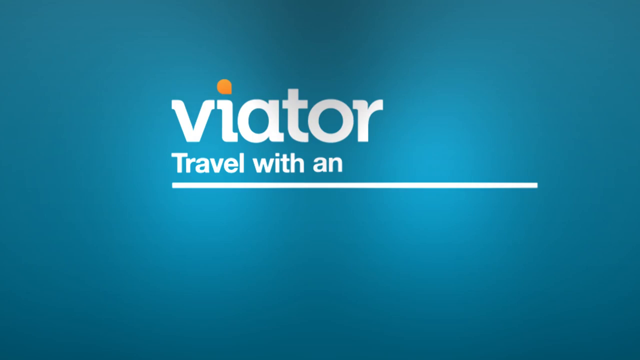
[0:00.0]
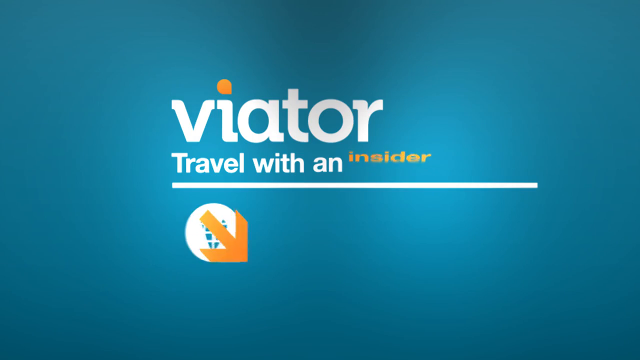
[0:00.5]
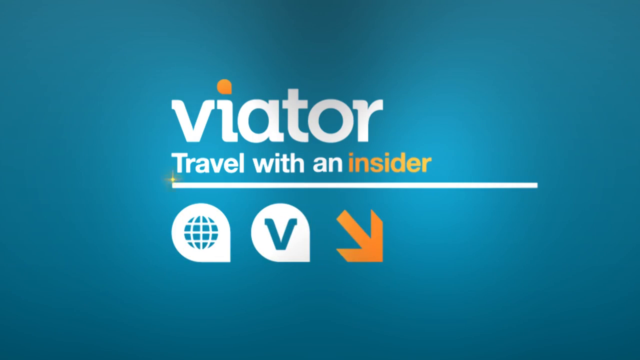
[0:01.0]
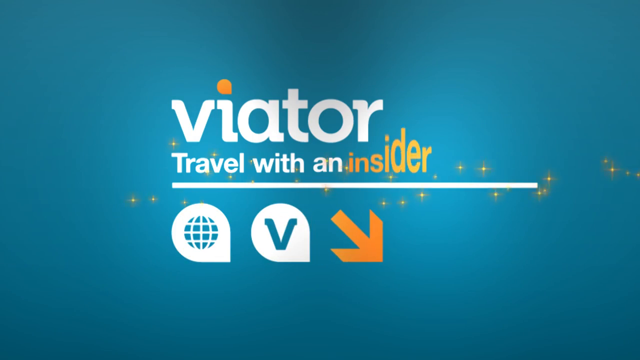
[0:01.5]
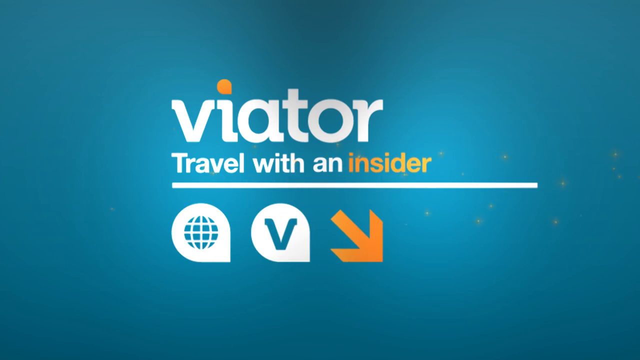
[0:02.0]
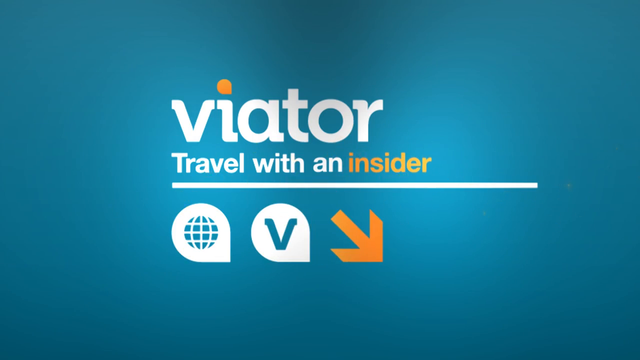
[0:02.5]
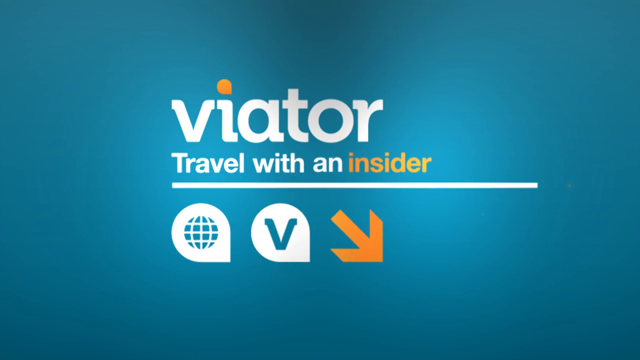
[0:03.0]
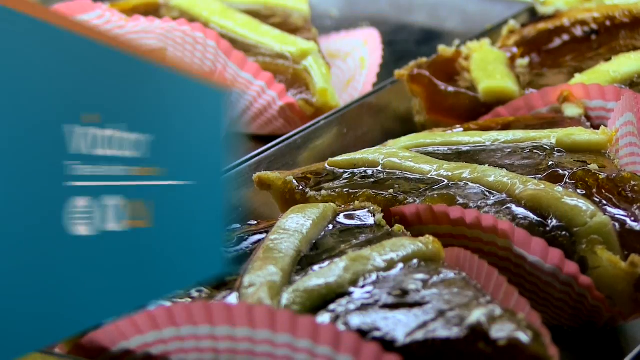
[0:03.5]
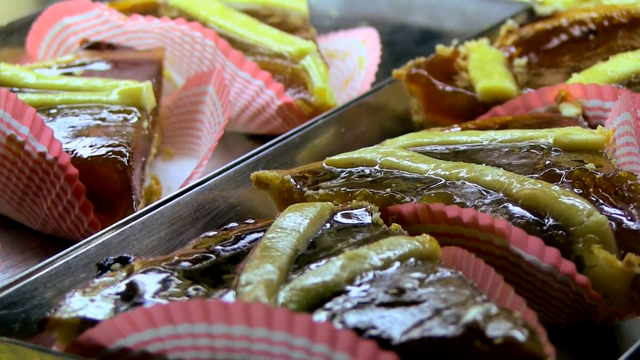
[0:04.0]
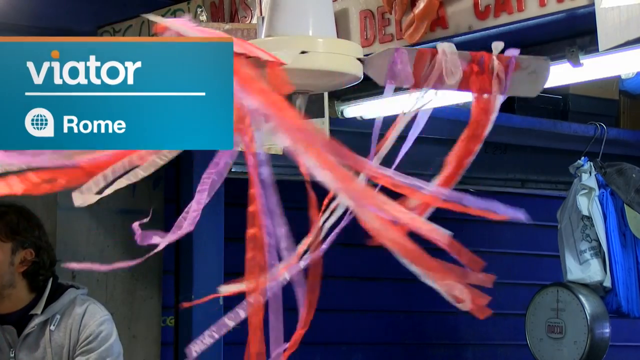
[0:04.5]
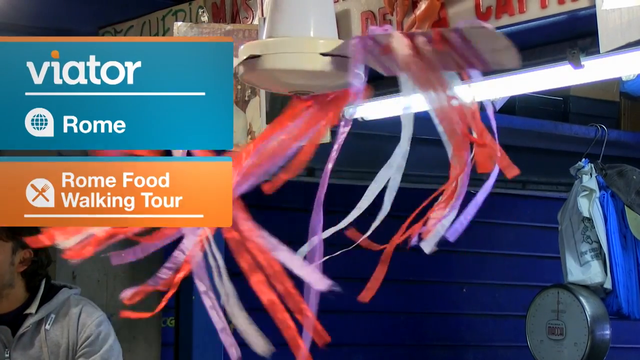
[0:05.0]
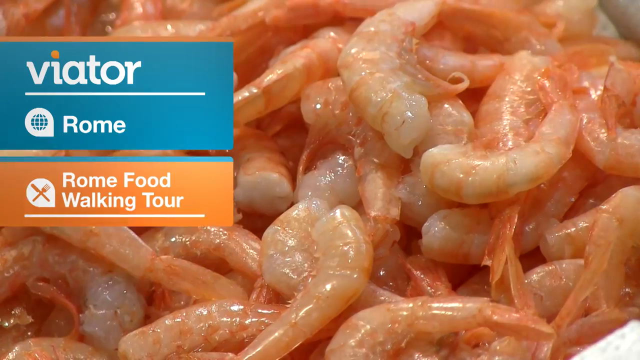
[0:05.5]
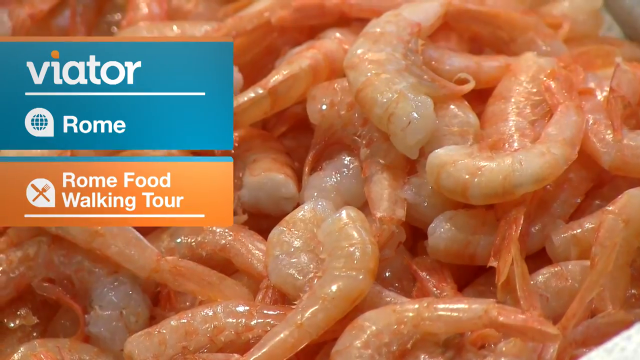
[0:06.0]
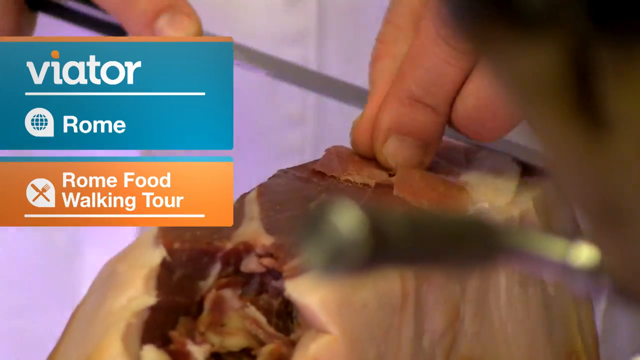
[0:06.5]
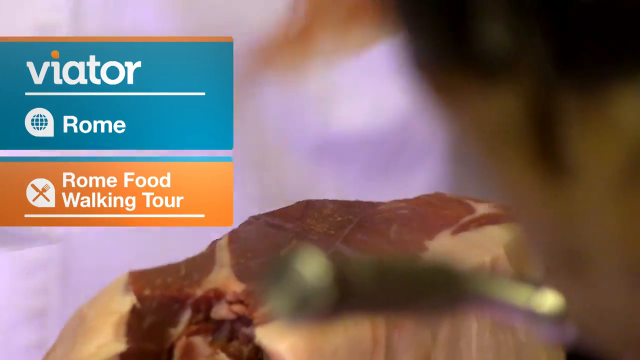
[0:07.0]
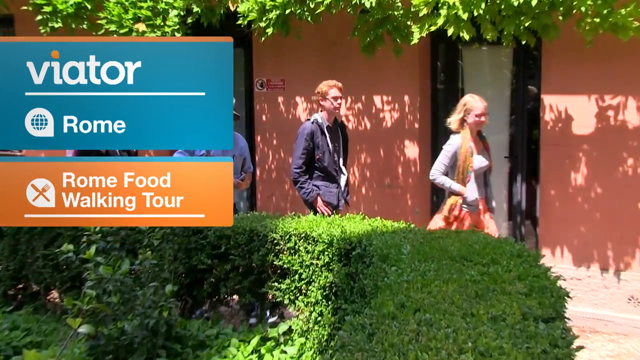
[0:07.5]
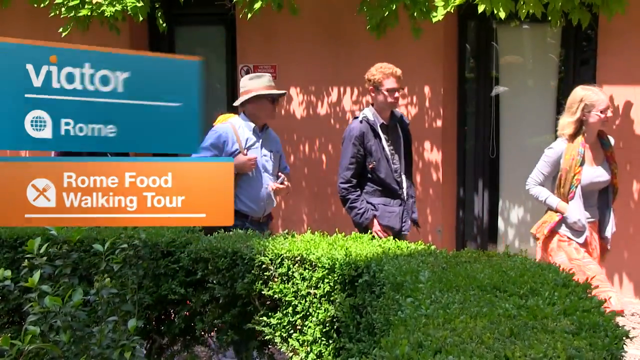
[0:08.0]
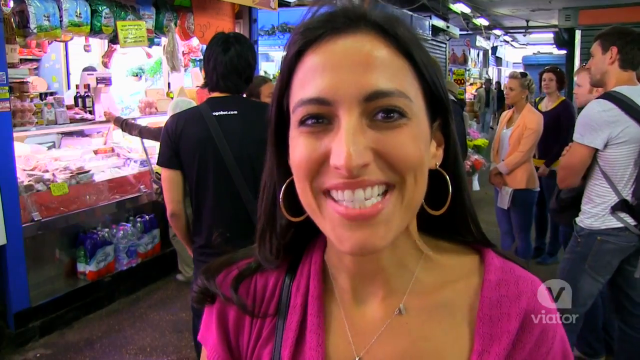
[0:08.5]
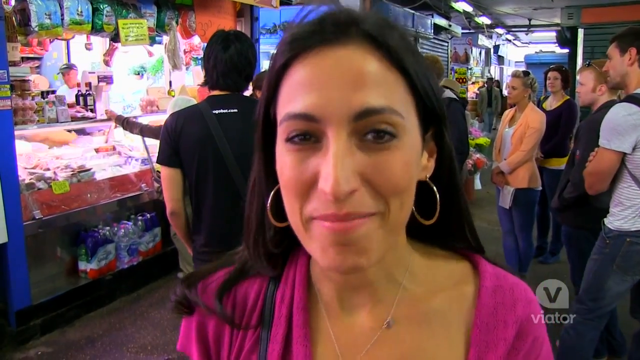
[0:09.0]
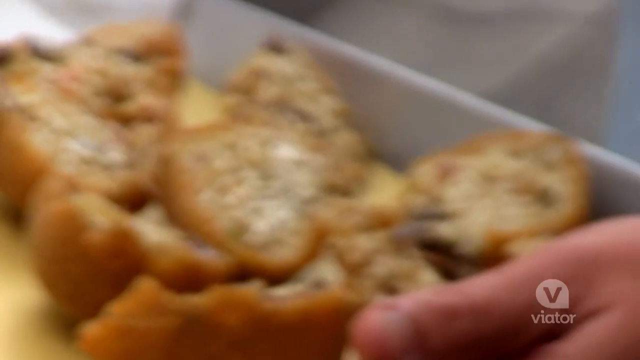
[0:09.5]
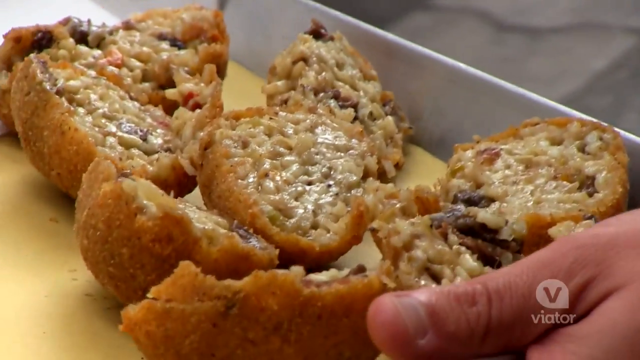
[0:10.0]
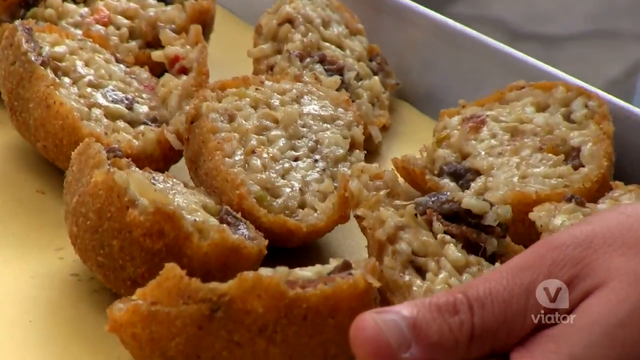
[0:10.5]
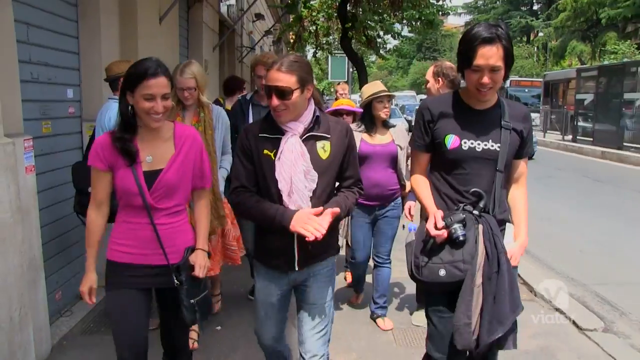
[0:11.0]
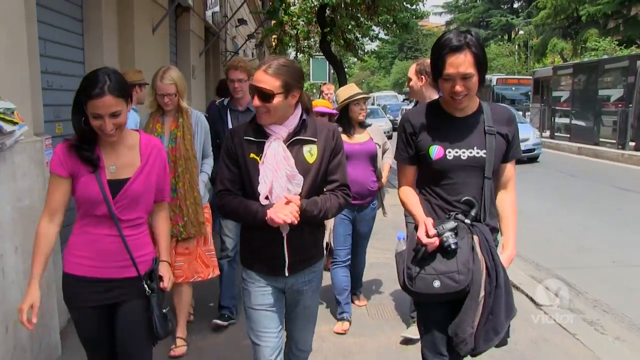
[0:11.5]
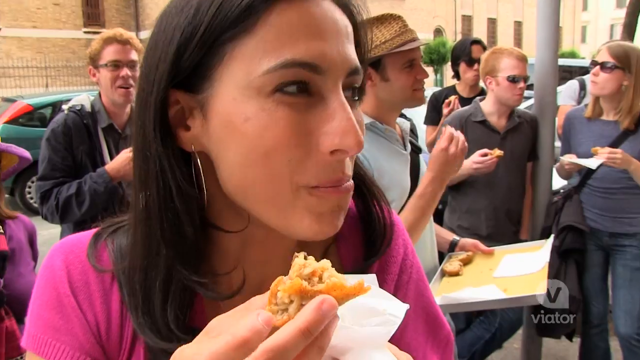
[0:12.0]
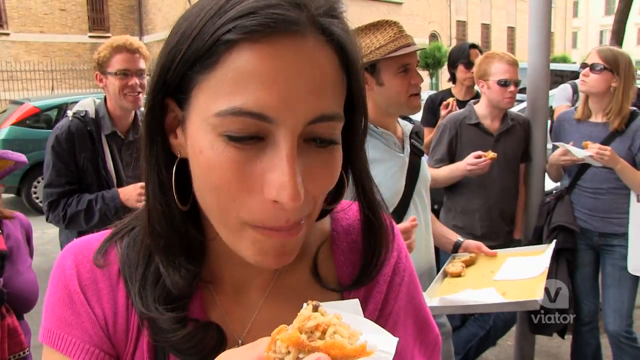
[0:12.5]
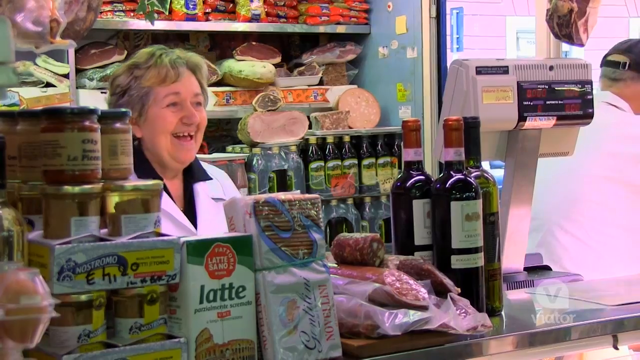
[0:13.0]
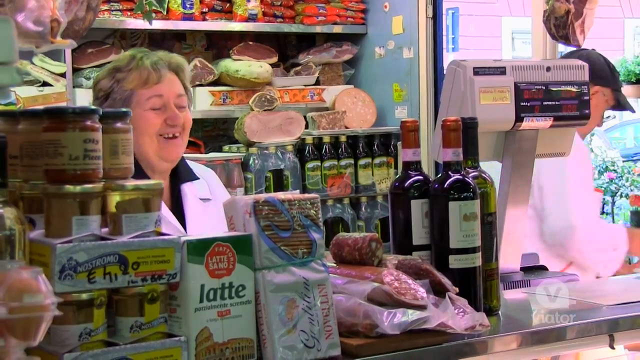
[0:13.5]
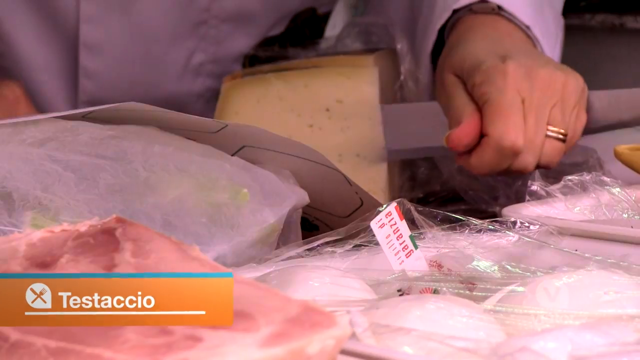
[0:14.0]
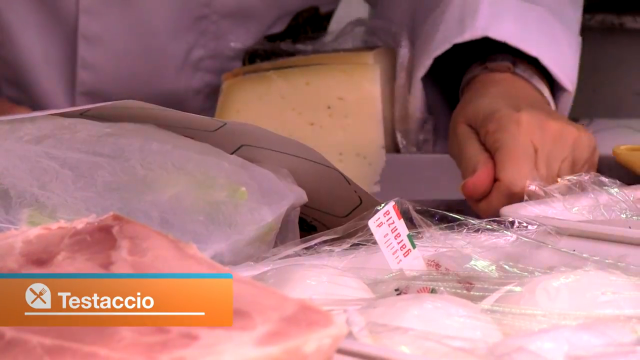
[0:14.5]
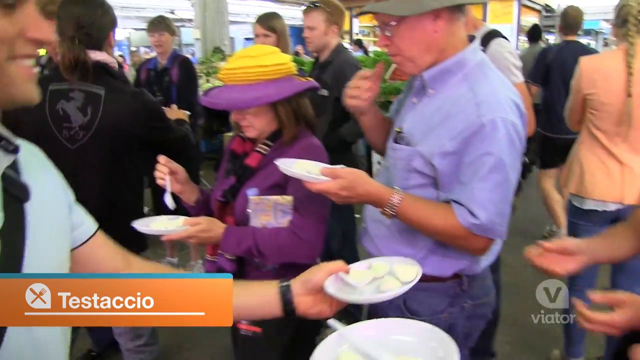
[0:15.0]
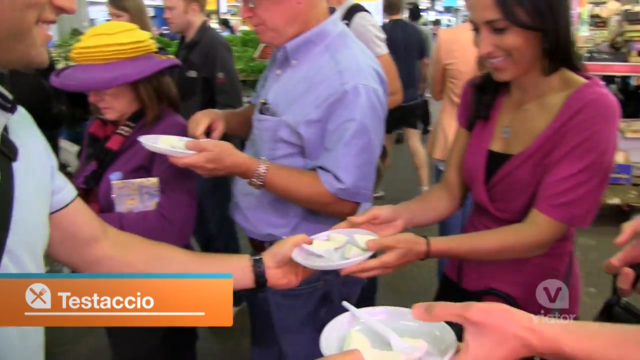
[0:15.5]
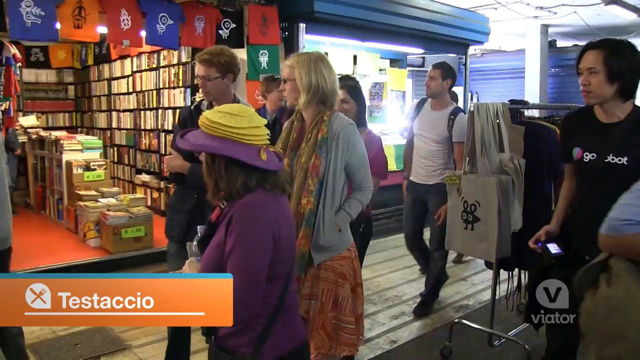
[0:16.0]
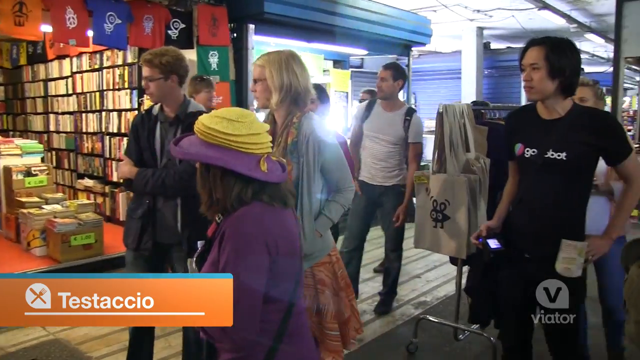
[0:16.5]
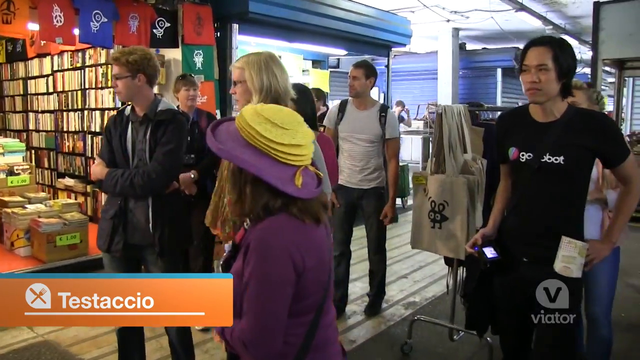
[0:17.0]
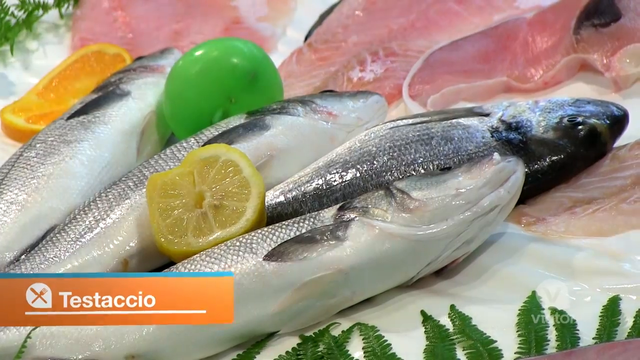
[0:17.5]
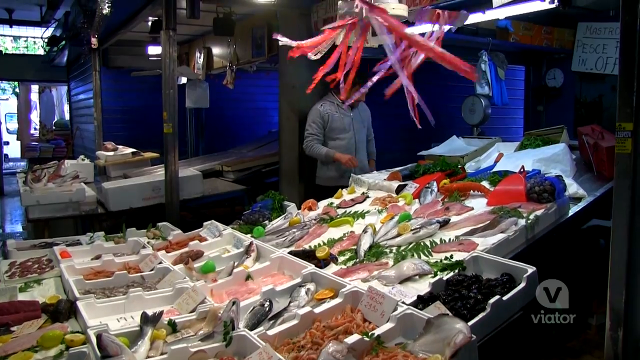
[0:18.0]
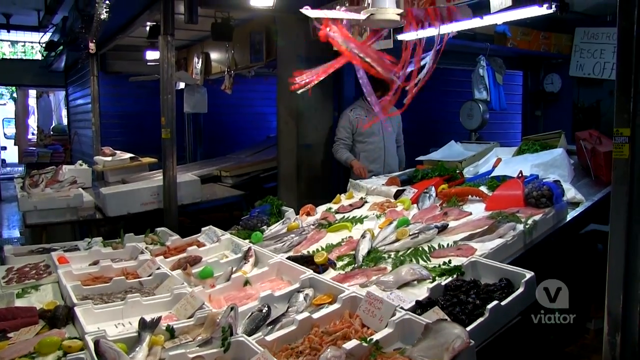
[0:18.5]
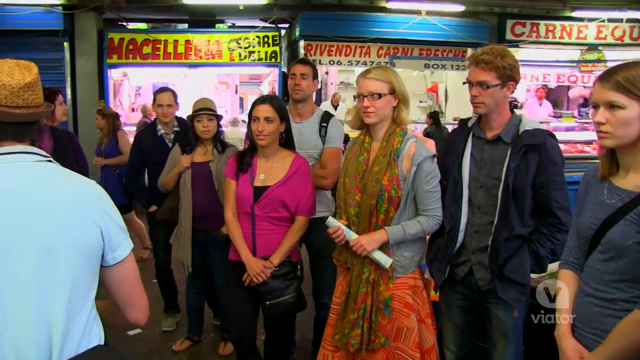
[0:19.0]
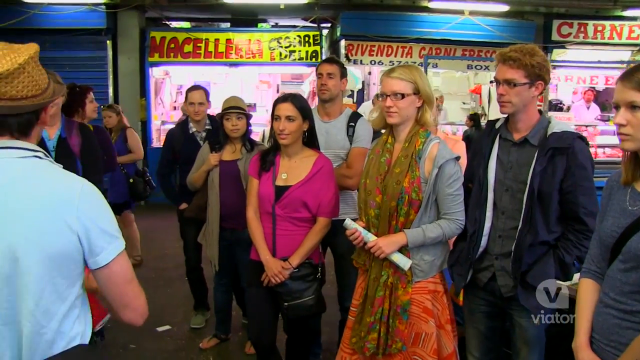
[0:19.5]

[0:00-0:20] An outdoor food festival takes place in the daytime, with the sun shining bright and lots of lush greenery in the background. There are lots of stalls selling many different delicious-looking food items, and it seems they are giving out samples as well as selling food. There is cheese, along with fresh fish and seafood and what looks like possibly octopus. People receive plates of food and walk around outdoors, talking to each other, smiling and eating, while plates of samples are given away. A white ceiling fan has some sort of orange or red streamers hanging from it. A man slices cheese by hand.